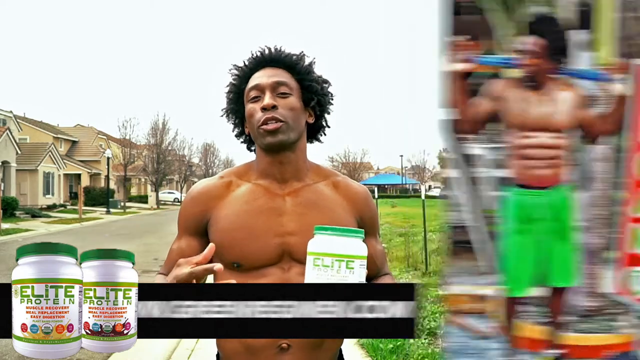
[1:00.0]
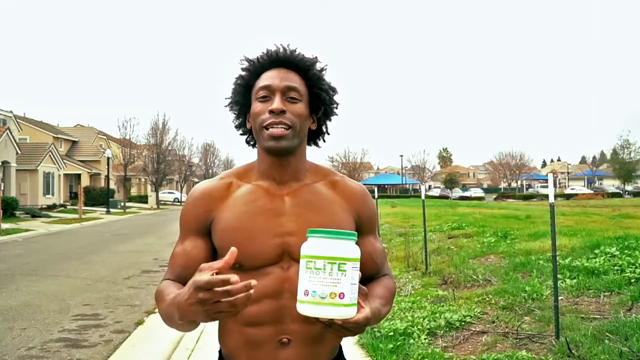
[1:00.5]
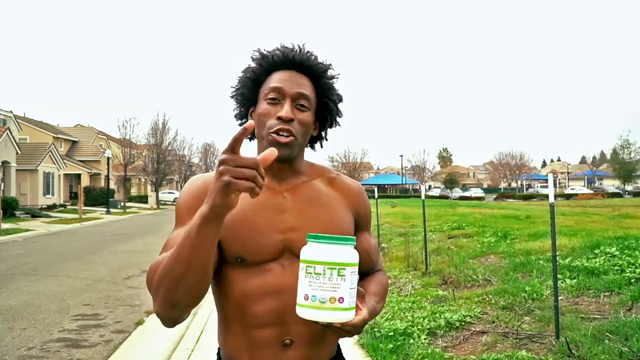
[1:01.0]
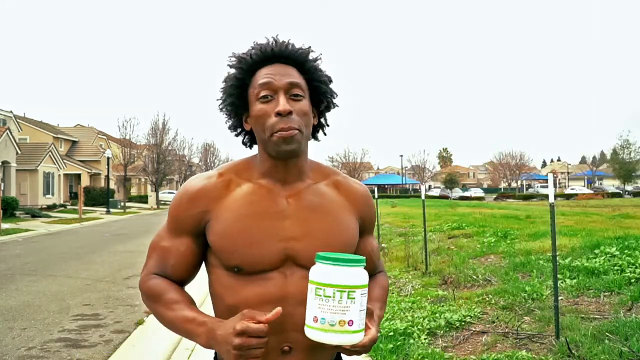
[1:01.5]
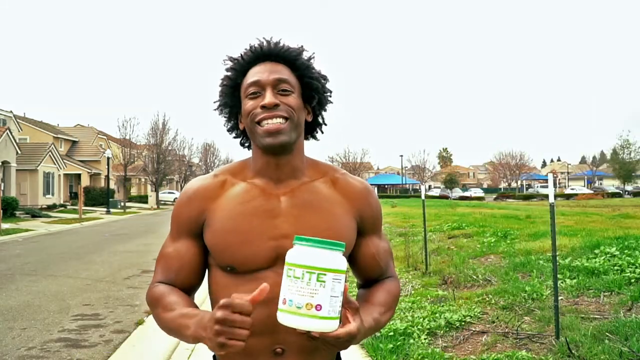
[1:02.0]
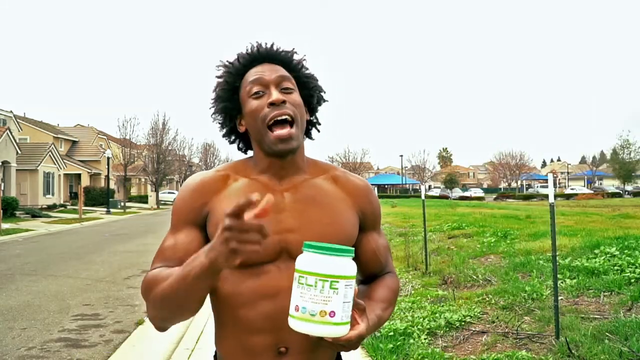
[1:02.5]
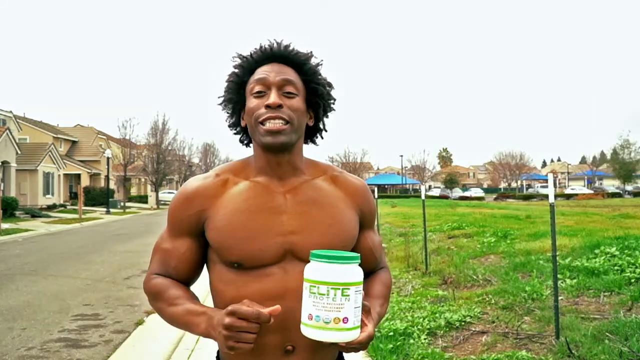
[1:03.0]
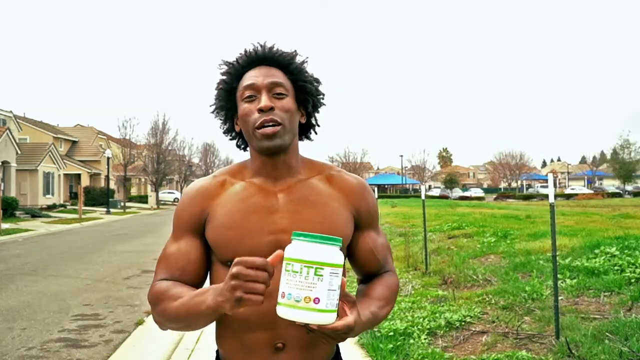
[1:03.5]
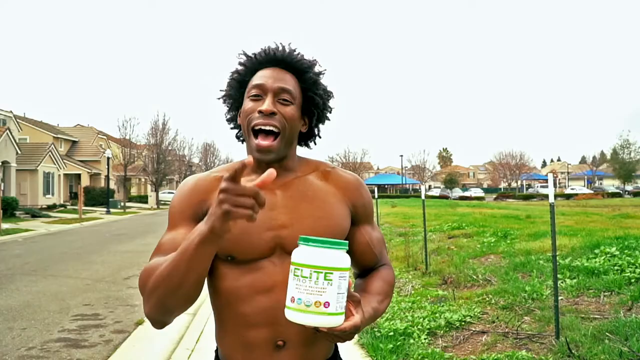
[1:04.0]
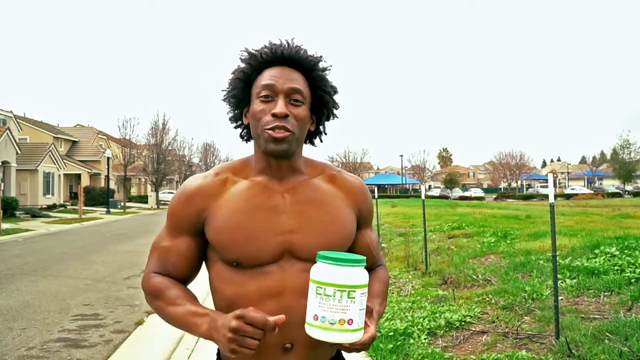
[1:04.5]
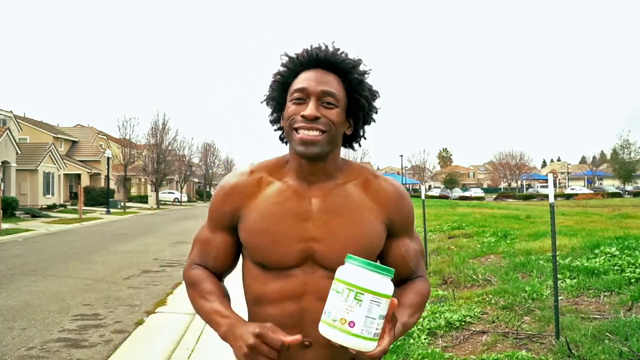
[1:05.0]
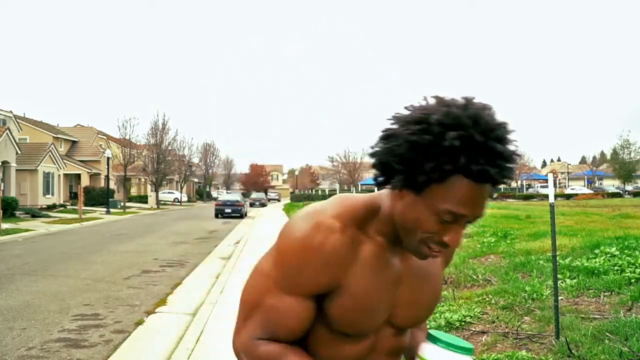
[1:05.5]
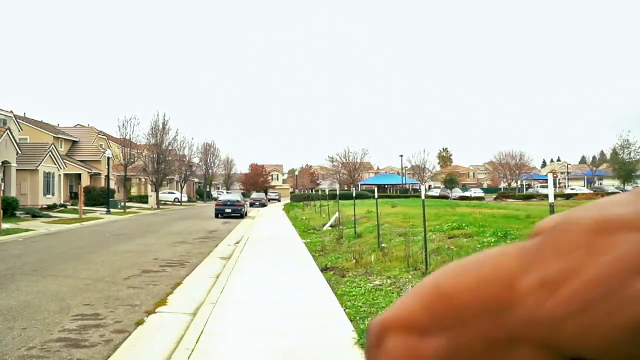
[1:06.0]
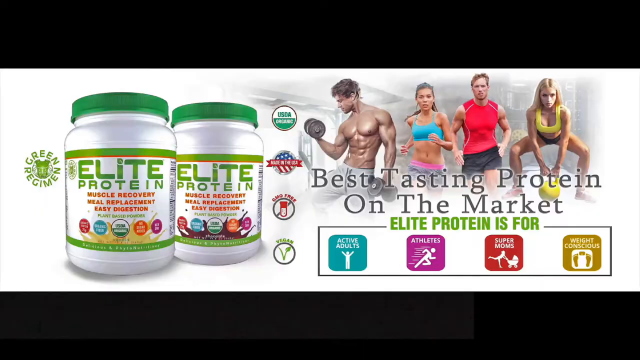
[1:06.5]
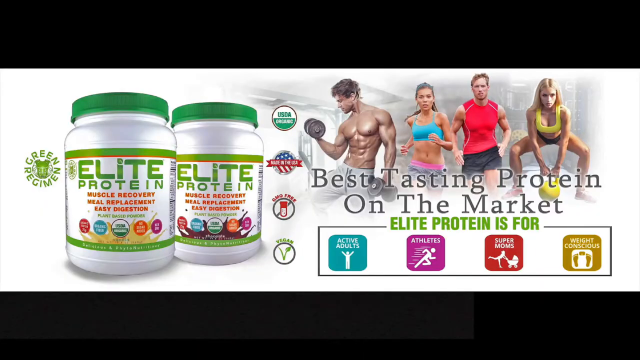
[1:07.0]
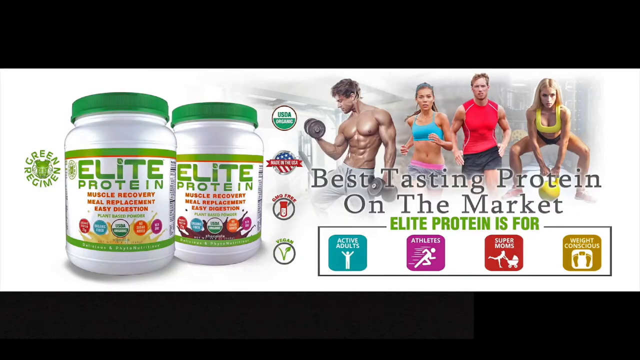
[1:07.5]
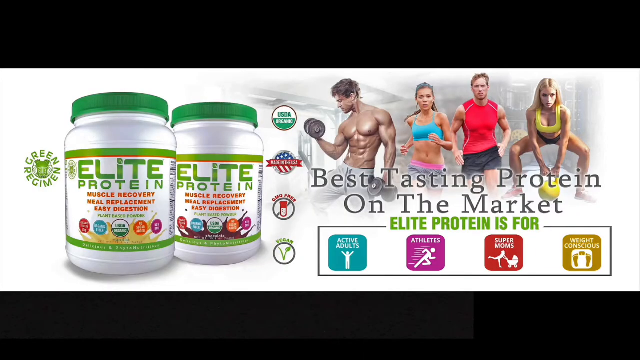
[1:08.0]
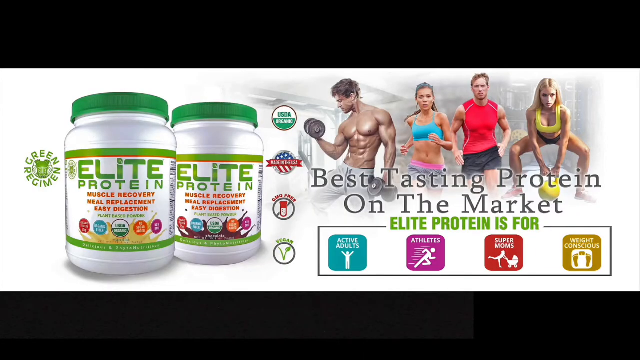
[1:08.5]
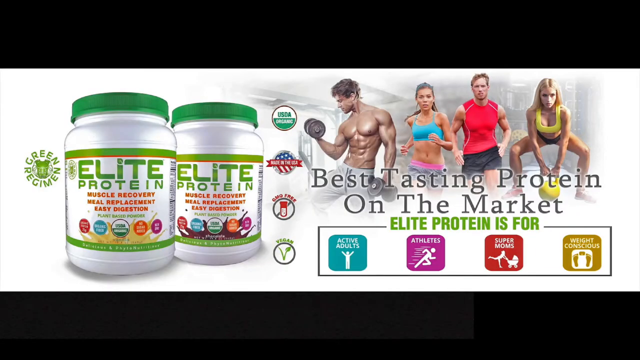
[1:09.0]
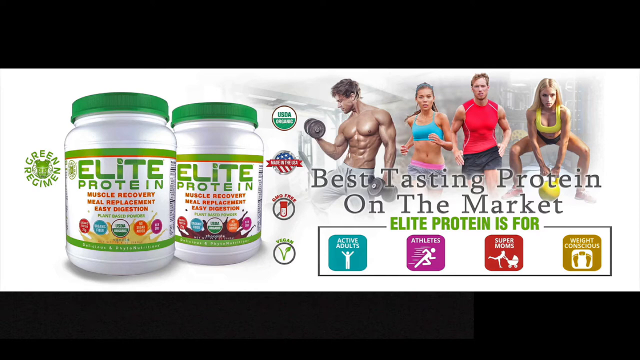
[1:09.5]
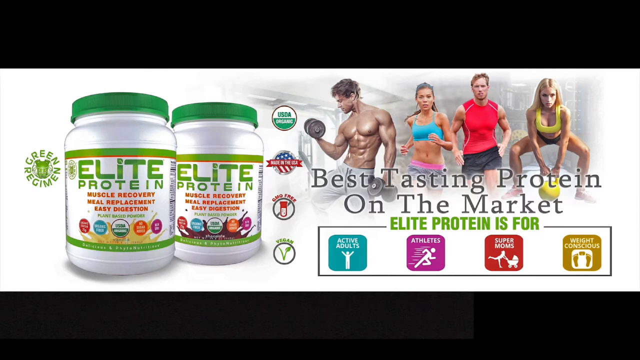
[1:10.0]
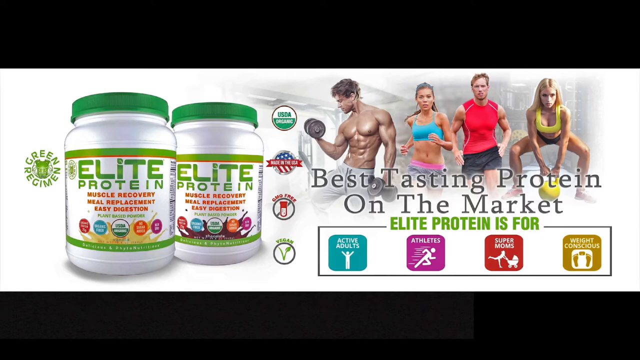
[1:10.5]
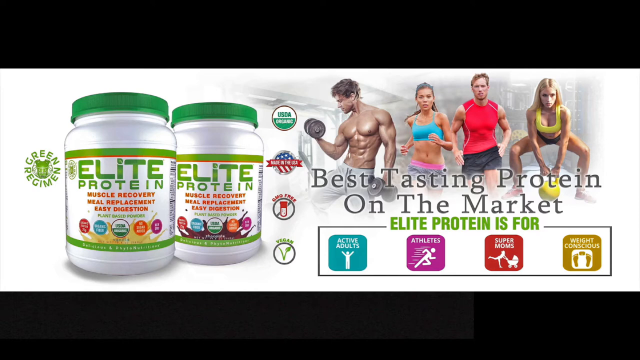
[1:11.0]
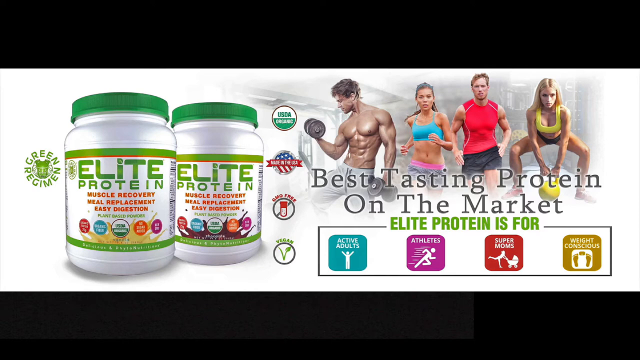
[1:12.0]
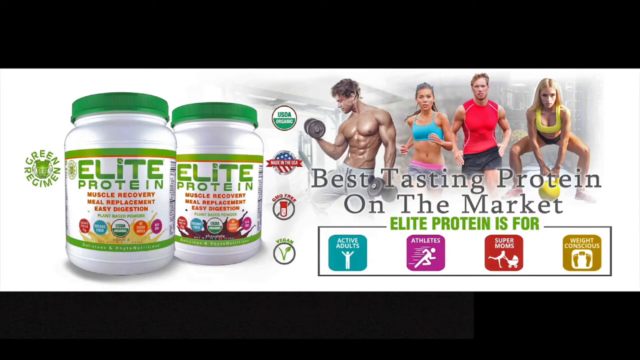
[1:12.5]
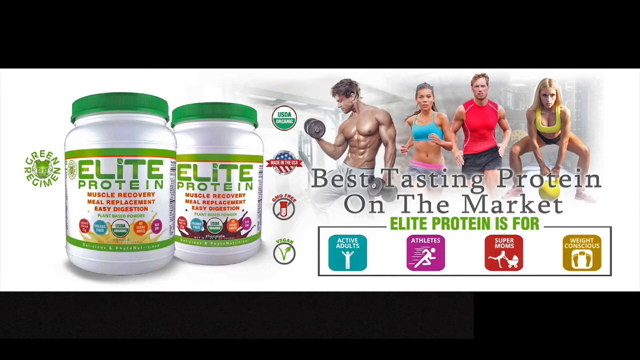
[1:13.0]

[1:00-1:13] The video returns to the man standing in his neighborhood as various slide-outs and pop-ups appear. He makes the same sort of hand gestures and smiles at the camera, appearing to give some sort of motivational talk. He gets his jogging posture back together, pulling his hands in toward his body, gives a final shout-out, and takes off jogging from camera left to right, making sort of a left turn and jogging toward the camera. An outro then pops up showing two jars of the protein powder with four people working out at the top and the text "best tasting protein on the market."